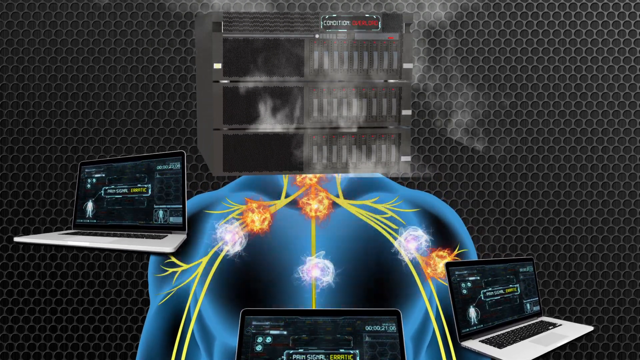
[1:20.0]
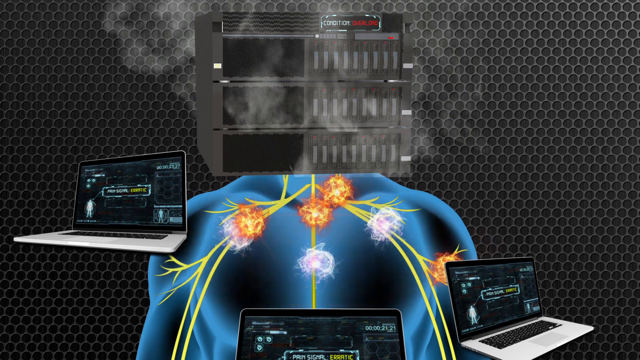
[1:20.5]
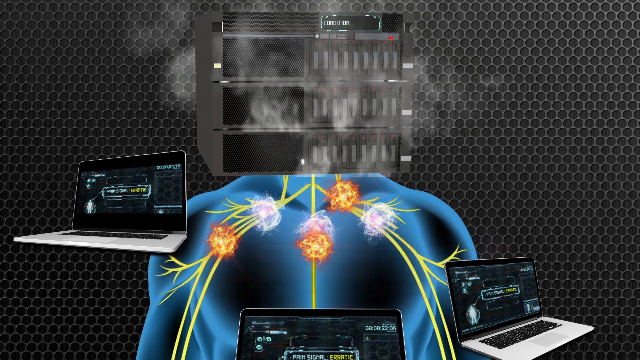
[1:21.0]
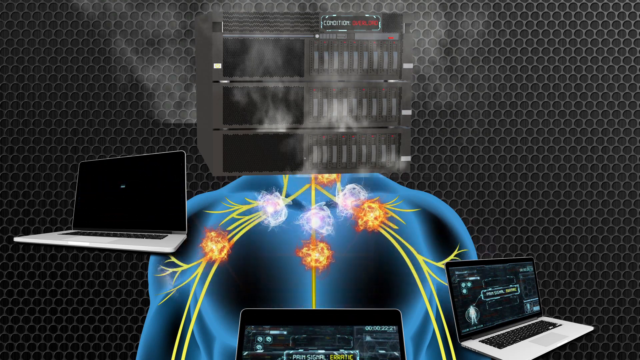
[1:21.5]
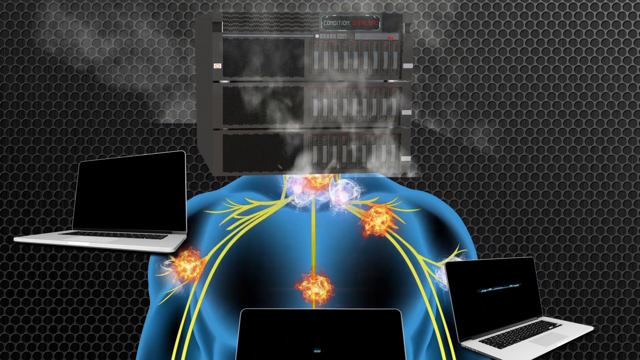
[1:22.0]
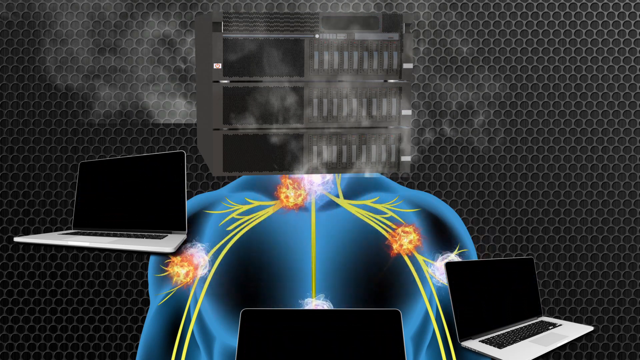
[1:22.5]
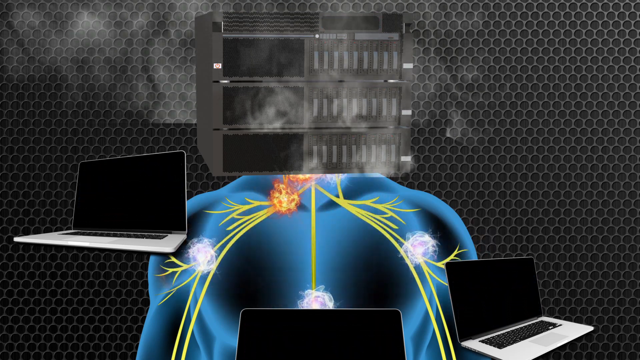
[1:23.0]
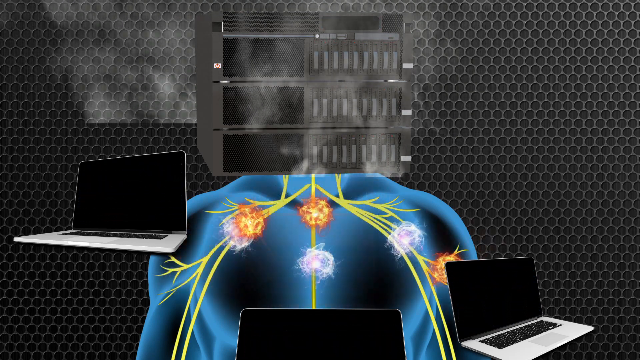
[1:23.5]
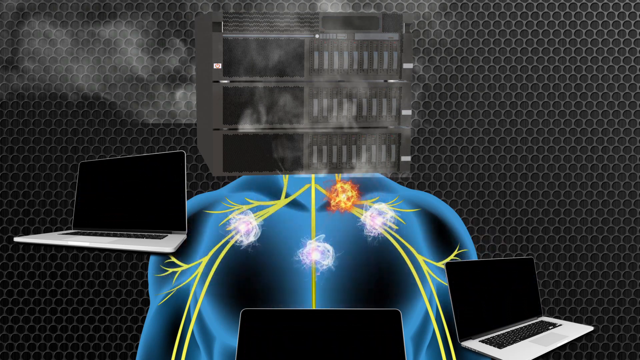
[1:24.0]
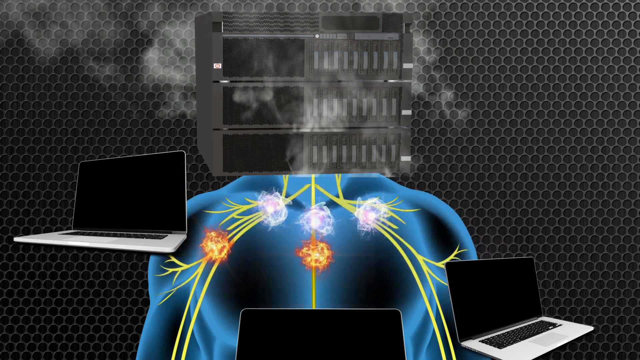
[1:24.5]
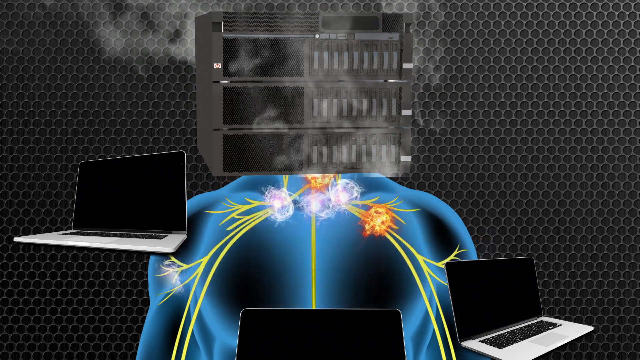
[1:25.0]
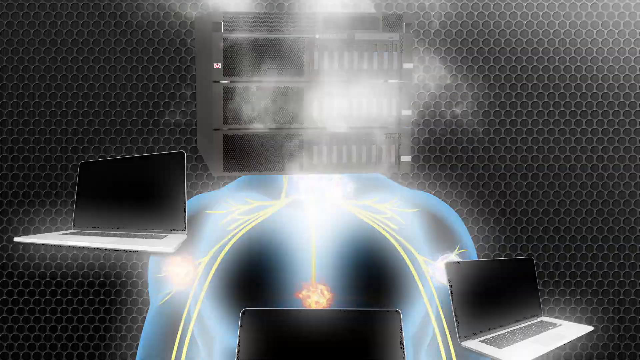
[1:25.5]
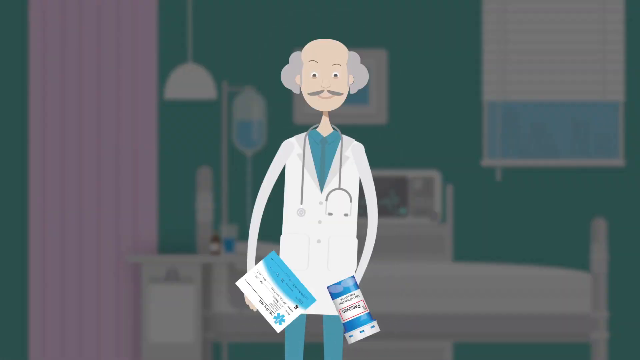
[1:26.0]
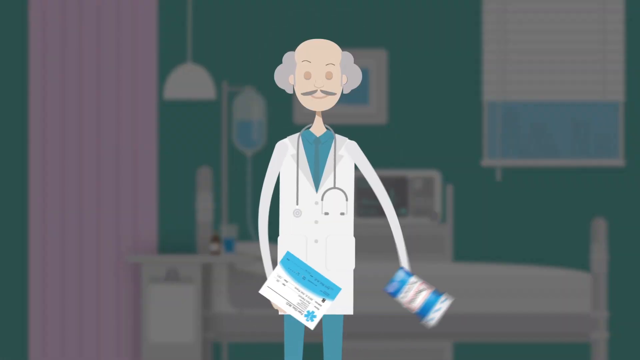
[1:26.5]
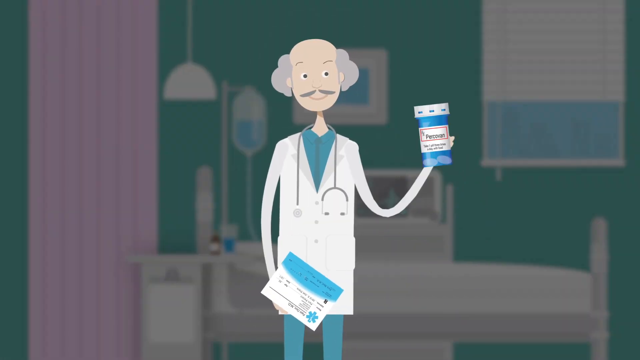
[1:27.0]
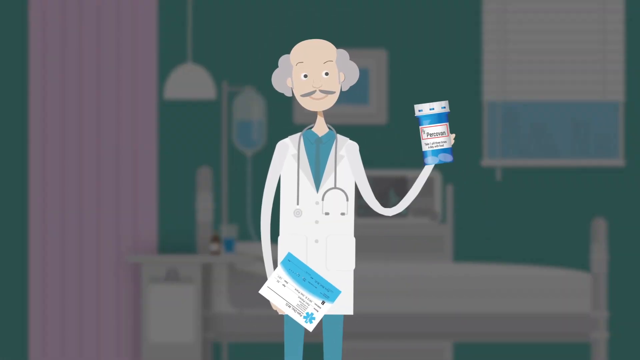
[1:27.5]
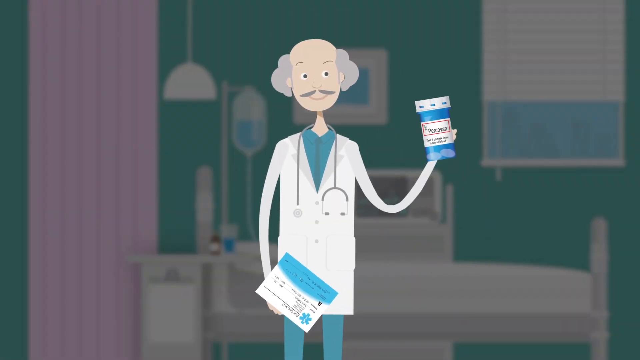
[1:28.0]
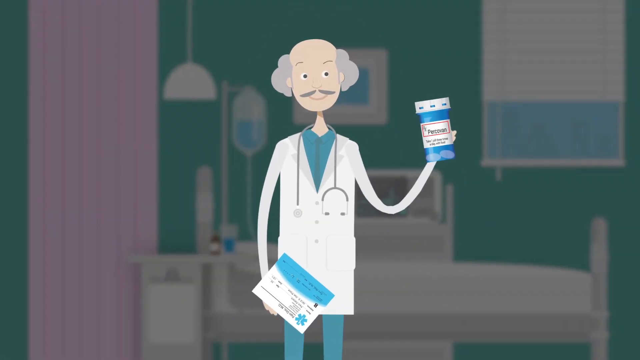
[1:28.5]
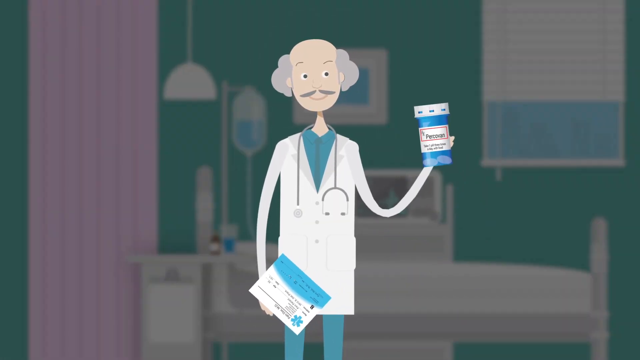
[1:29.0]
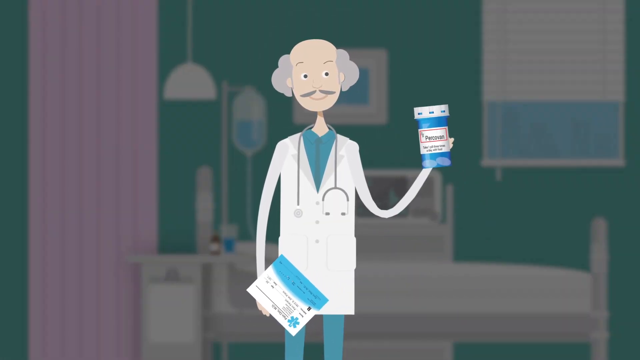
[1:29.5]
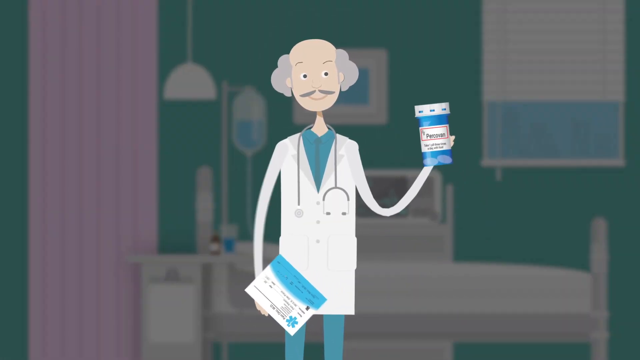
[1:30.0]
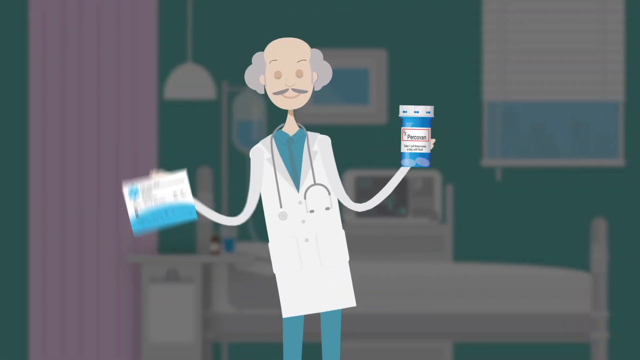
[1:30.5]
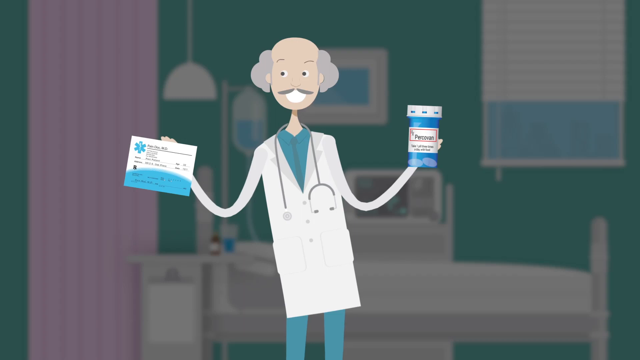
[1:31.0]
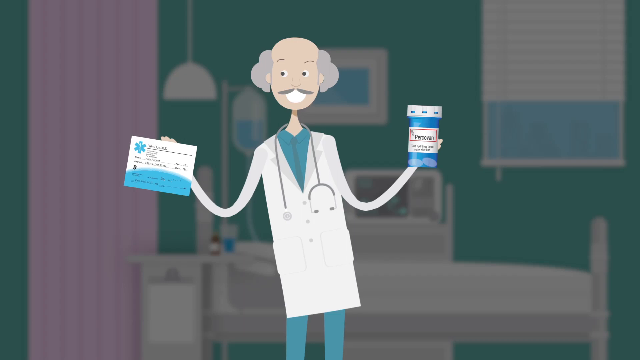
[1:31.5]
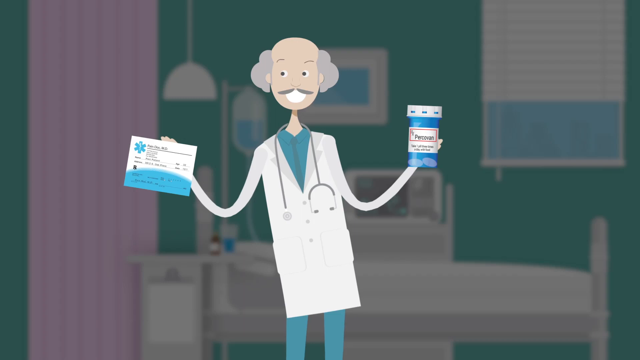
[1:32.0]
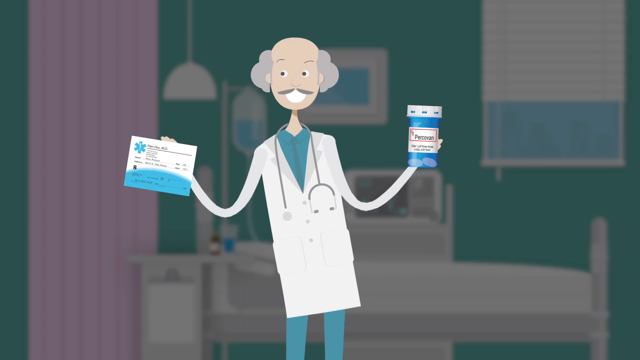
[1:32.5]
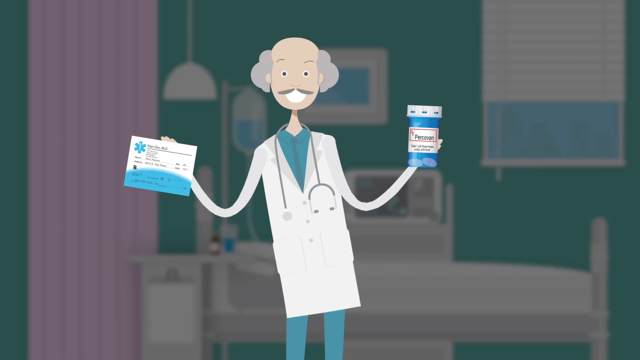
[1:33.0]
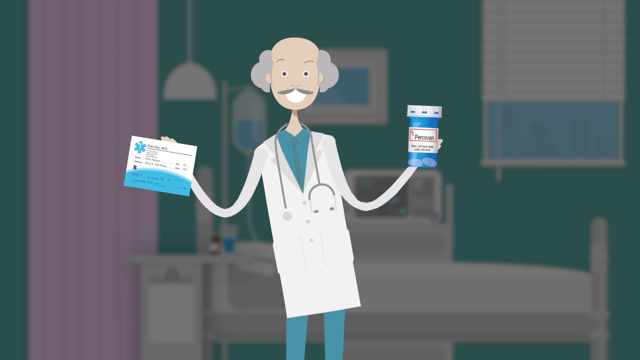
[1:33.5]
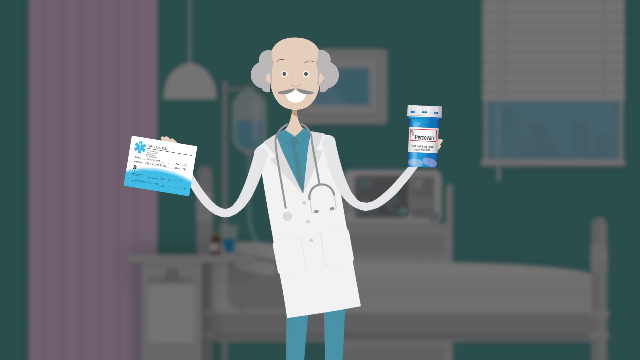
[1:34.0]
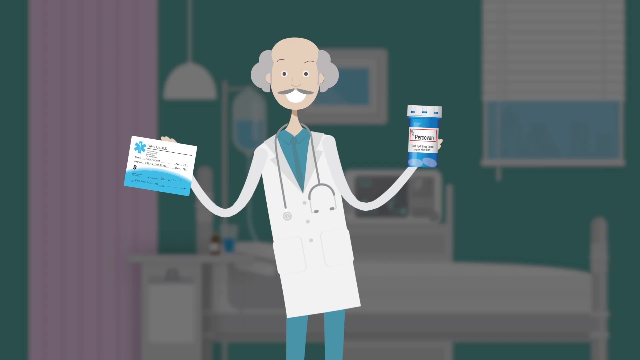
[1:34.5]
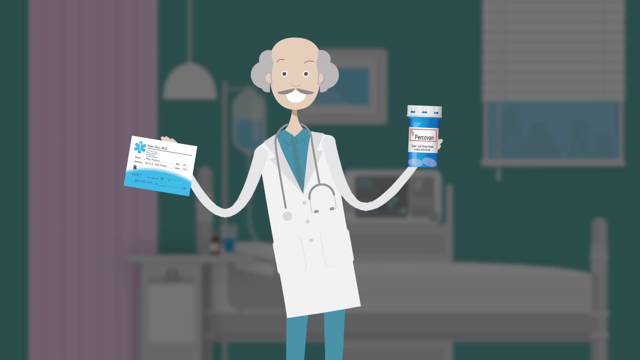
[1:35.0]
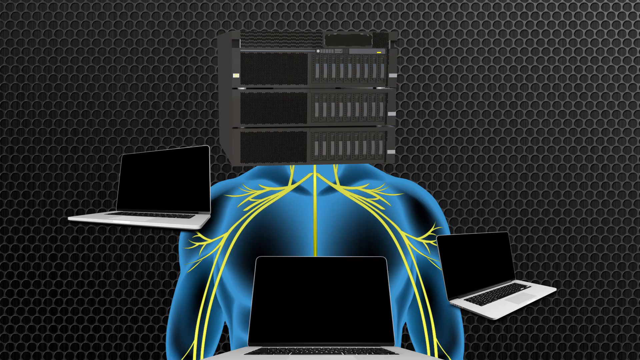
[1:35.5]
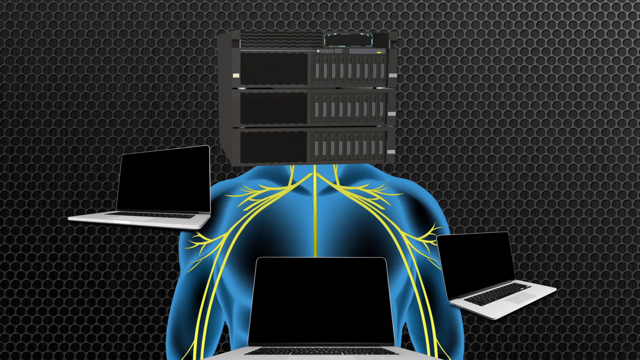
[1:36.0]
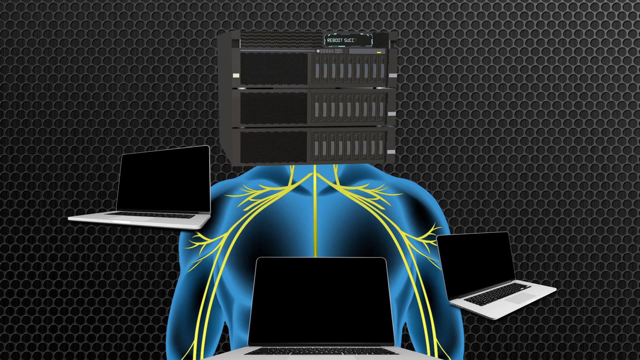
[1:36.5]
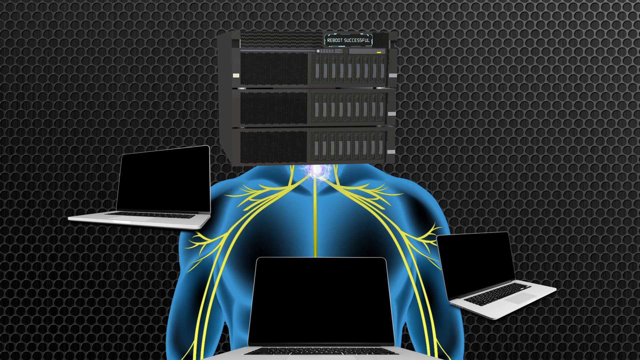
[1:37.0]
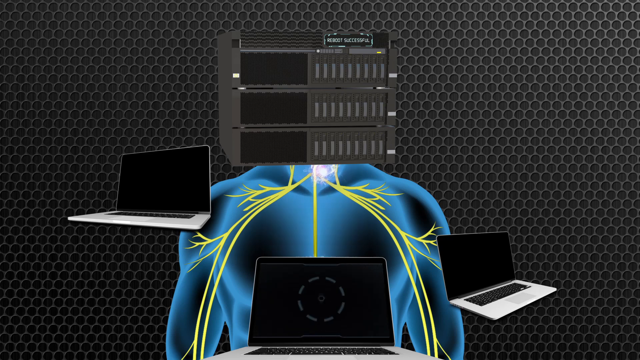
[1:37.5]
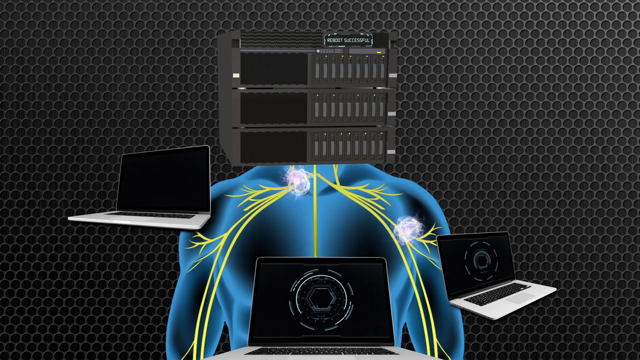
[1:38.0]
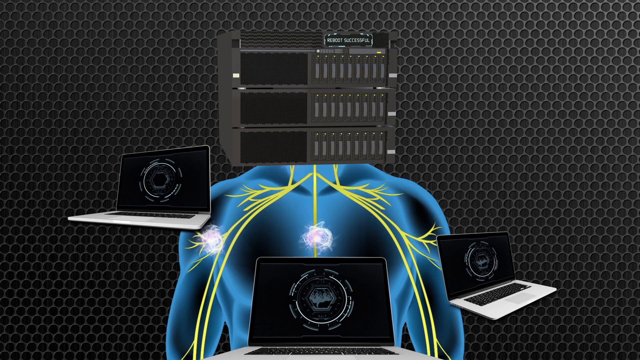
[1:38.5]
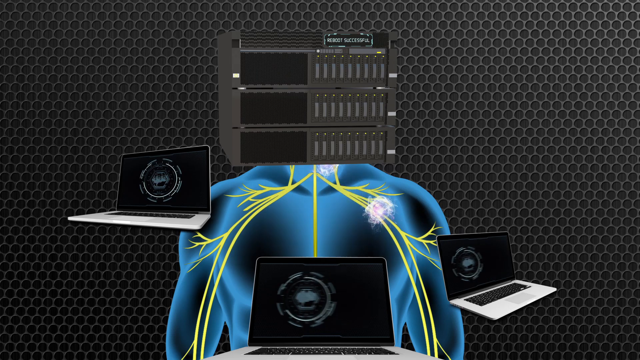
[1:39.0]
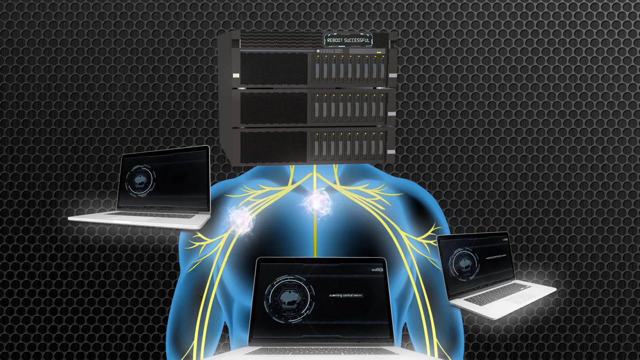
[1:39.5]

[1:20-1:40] The orbs move back and forth very quickly, then the laptops all turn off while the smoke grows bigger. Smoke comes out of one of the control center's vents, out the bottom, and out the sides and the back. The scene quickly snaps back to the hospital room with the turquoise wall. Front and center, the doctor holds pills in a blue bottle along with a piece of paper that seems to have a medical logo on it. He looks at the bottle, then brings up the paper while smiling into the camera. The view then returns to the orbs moving into the laptops and back out of the control center, which seems to be working once again.